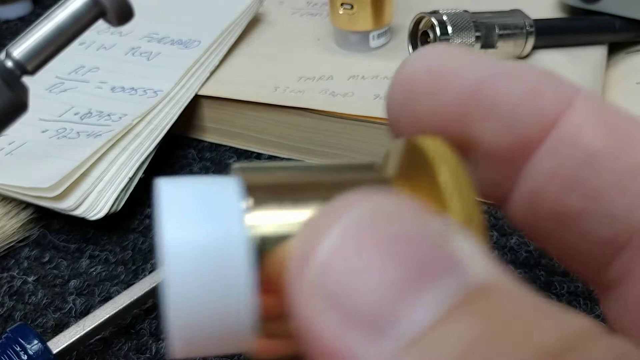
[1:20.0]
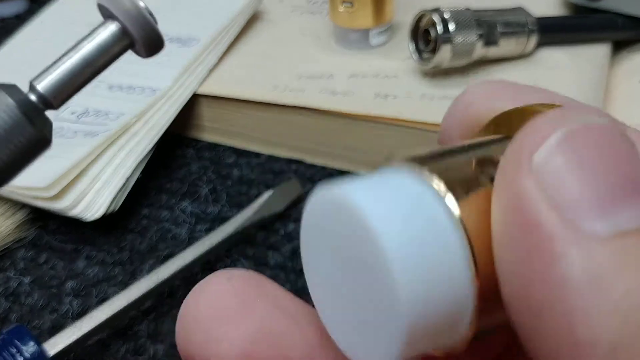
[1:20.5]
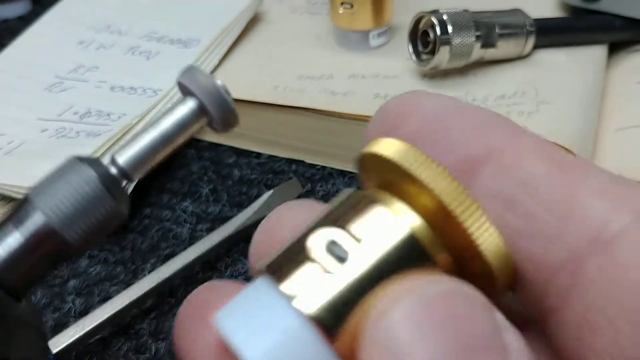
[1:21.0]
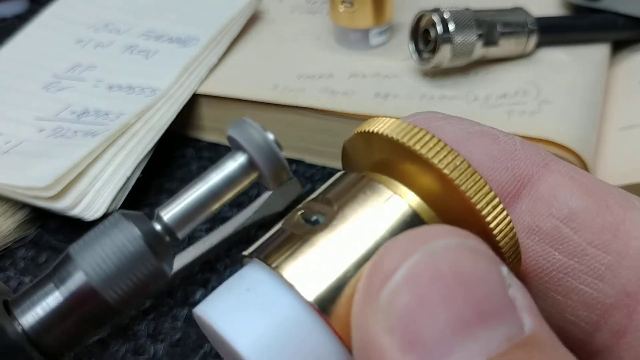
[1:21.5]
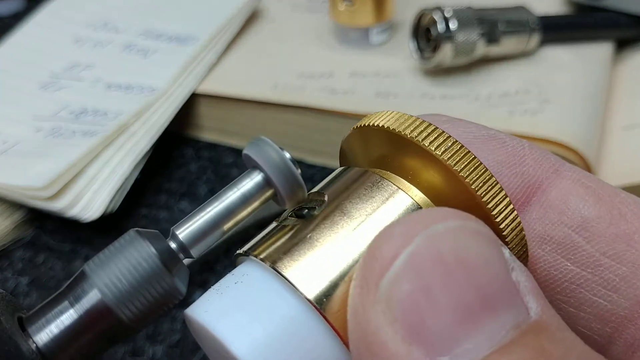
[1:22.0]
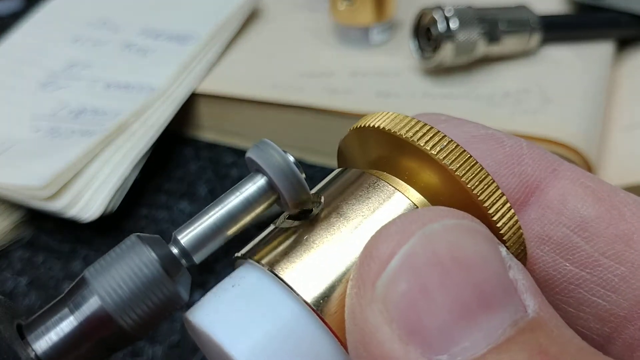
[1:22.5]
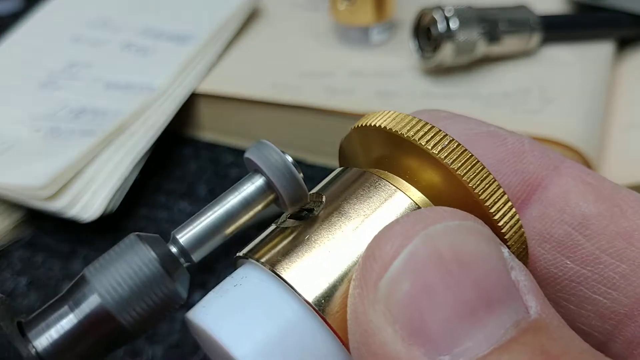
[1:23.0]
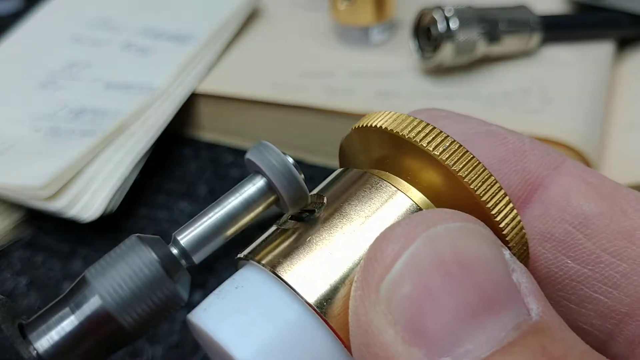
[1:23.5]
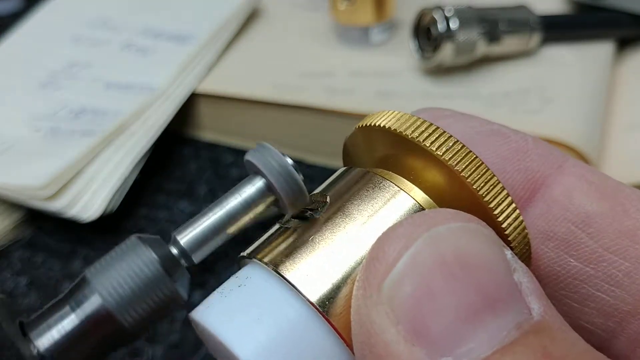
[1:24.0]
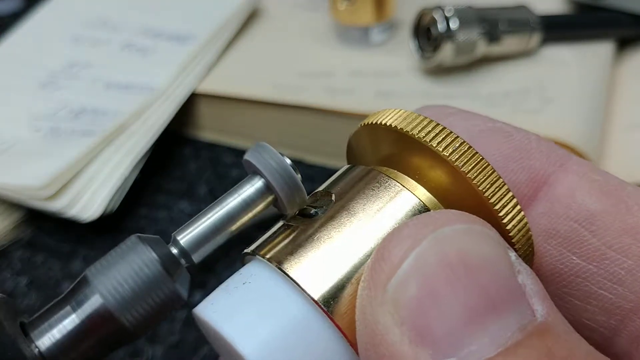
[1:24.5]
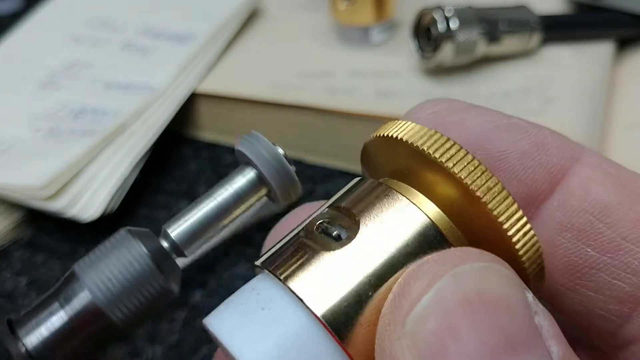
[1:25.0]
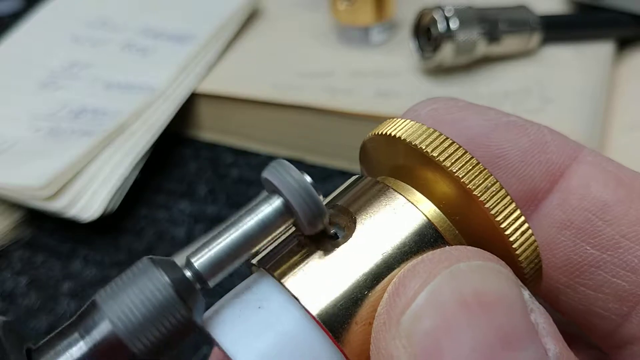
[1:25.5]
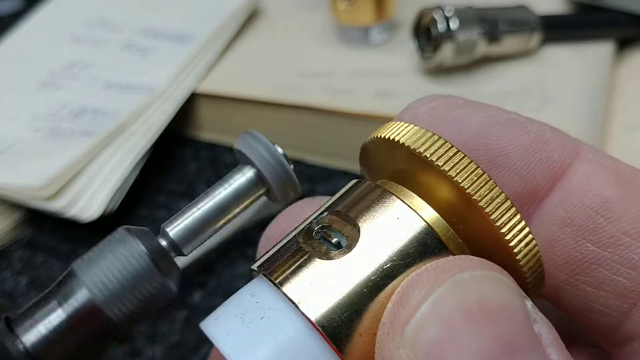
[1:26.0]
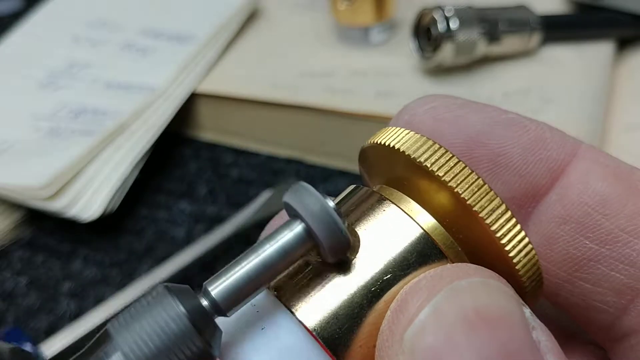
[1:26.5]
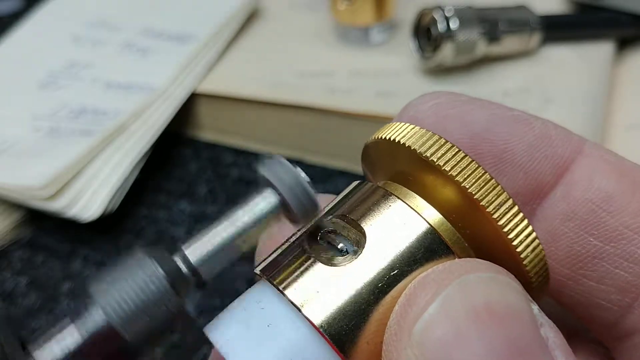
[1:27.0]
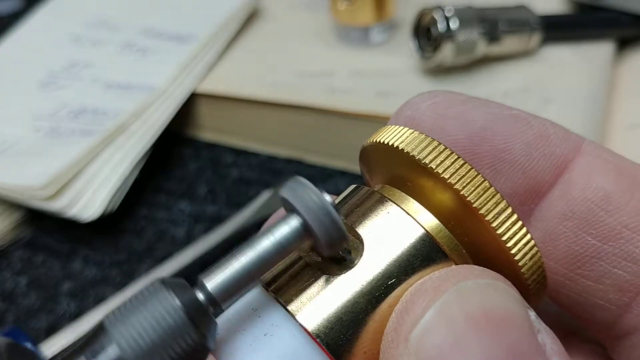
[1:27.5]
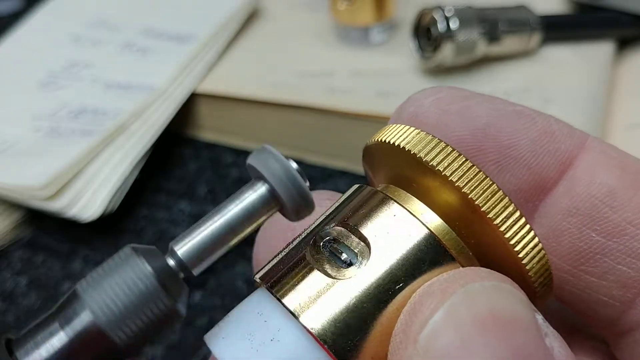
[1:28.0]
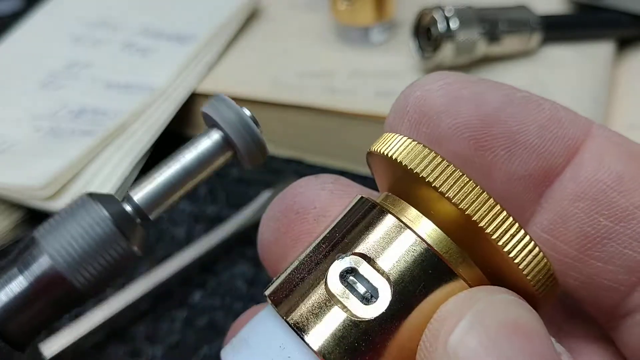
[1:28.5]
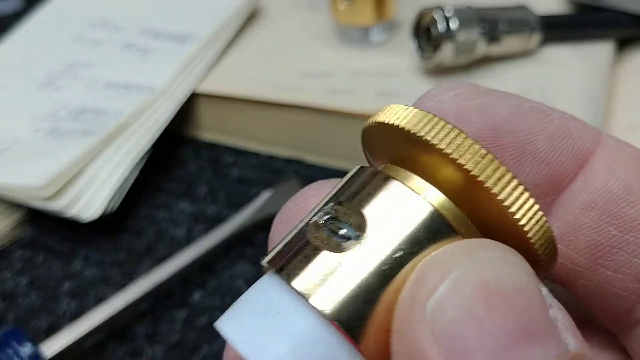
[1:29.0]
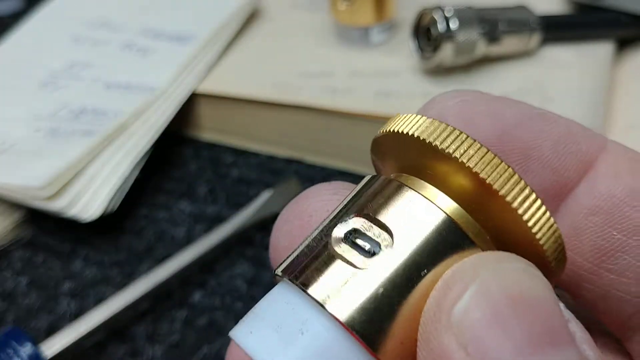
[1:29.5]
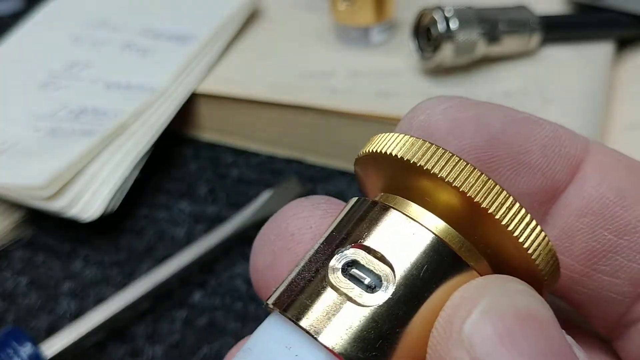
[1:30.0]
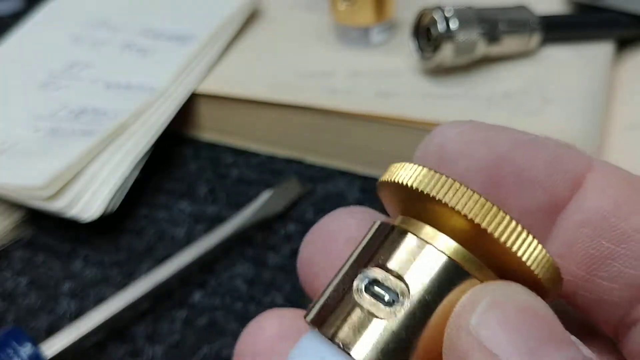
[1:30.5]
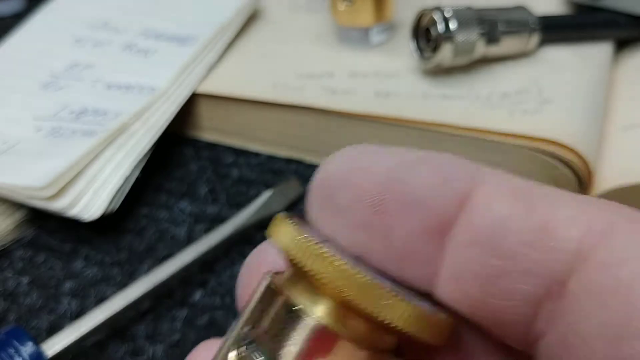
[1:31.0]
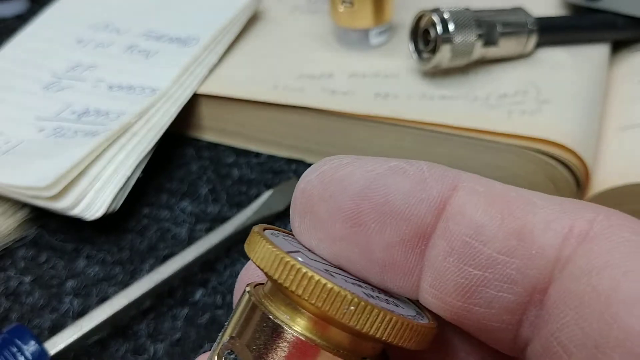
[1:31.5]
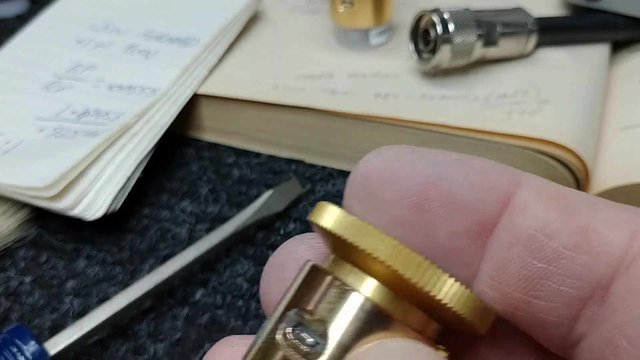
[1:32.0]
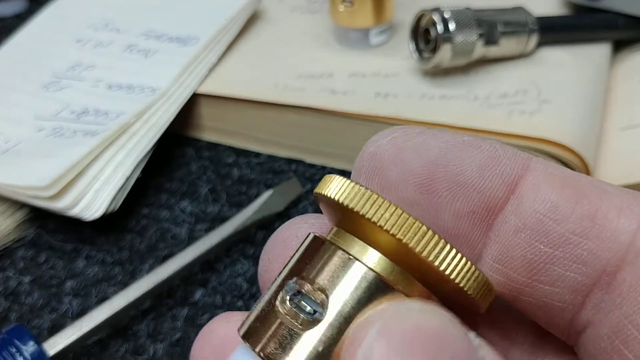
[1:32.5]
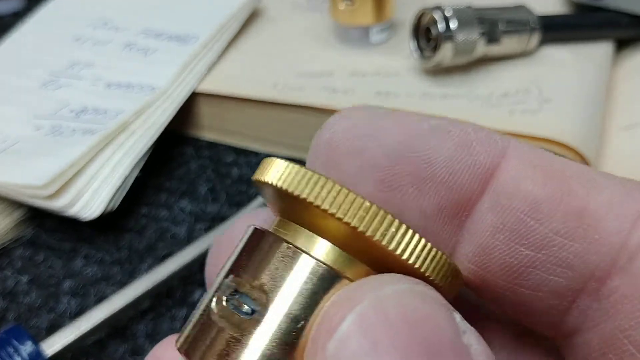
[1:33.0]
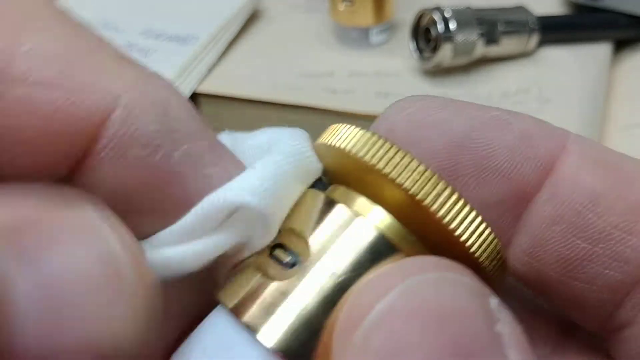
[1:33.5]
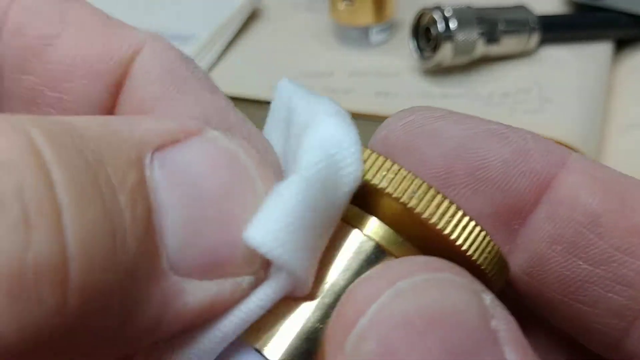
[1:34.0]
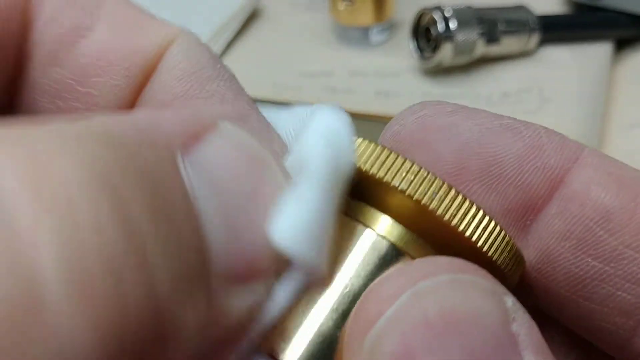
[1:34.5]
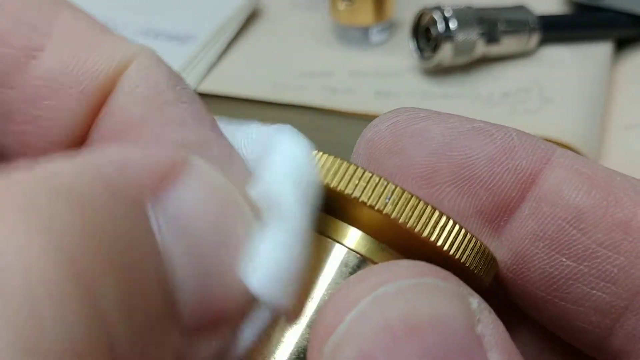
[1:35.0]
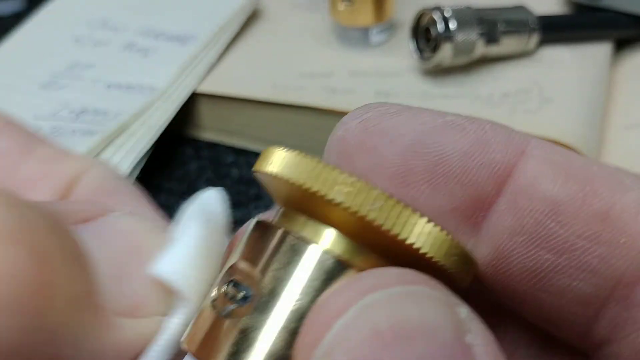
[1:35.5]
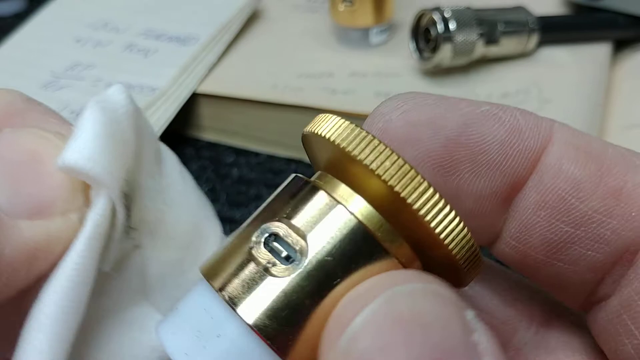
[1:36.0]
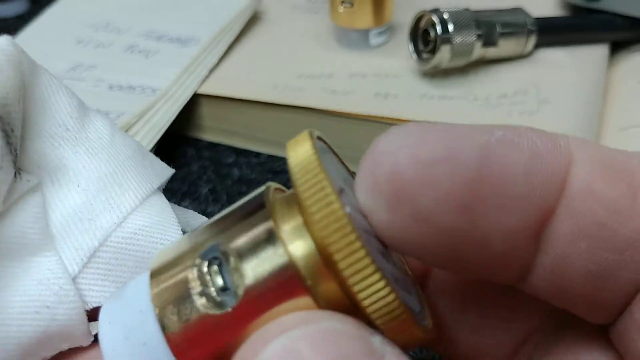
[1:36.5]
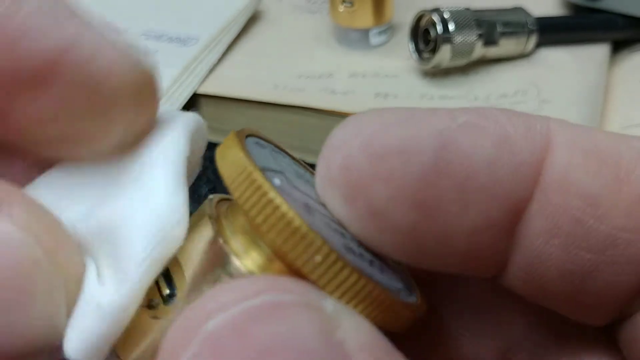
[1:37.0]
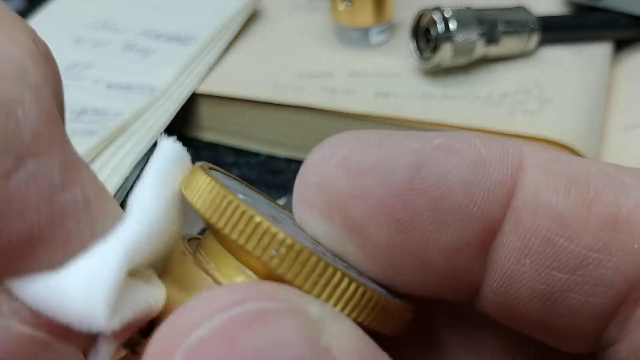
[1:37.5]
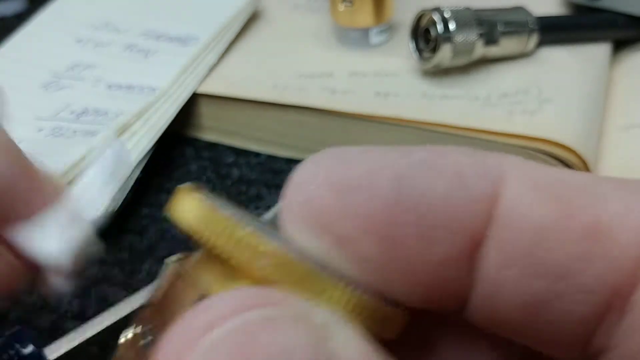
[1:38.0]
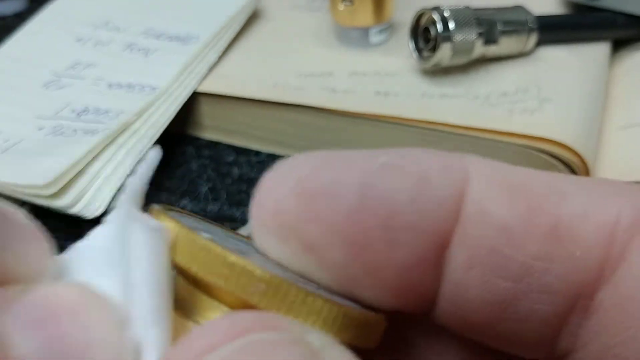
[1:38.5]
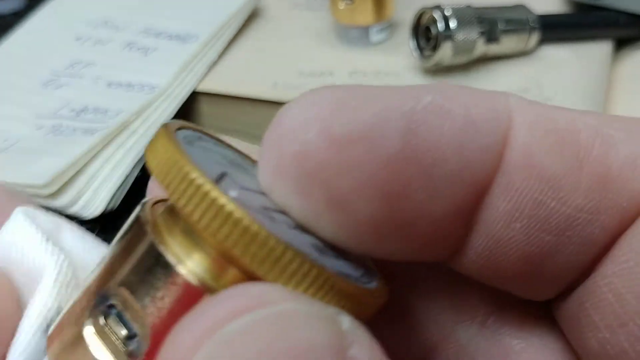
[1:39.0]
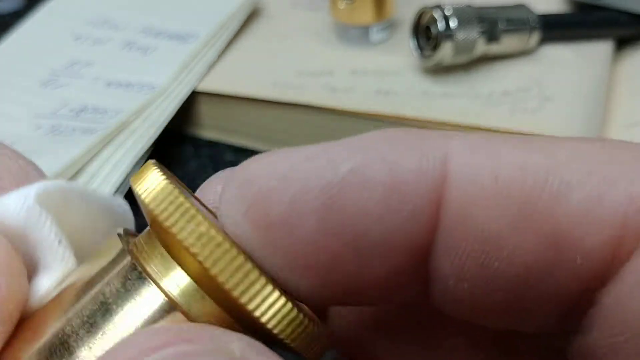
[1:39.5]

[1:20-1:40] A person holds an object that has what looks like a gold gear on top, attached to more gold metal that seems to be wrapped around plastic inside the metal. The person holds it in their right hand, and in their left hand holds another tool with a black bar and a silver bar sticking out of it, with what looks like a rubber disc attached to the end of the silver bar. They appear to use that rubber tip, which is possibly shiny and possibly spinning, to rub the object in their right hand, apparently cleaning it. They then grab a white cloth and start cleaning some of the debris from the tool used to rub the object.